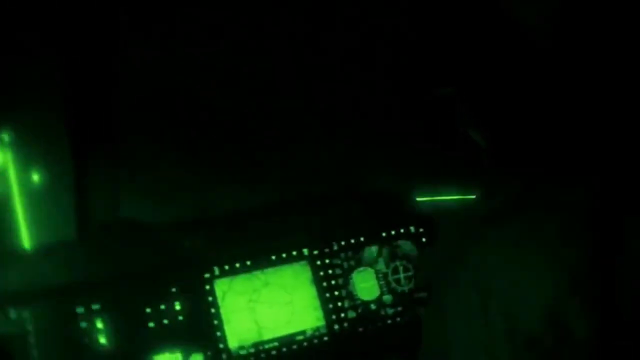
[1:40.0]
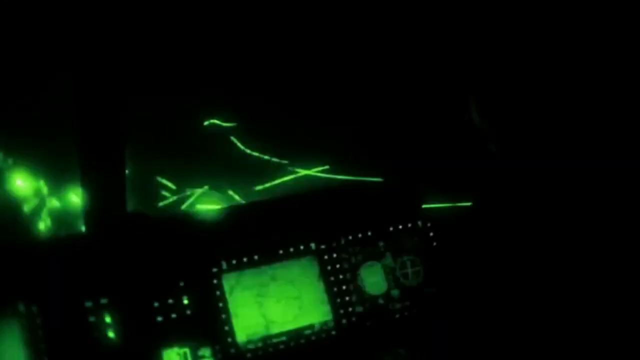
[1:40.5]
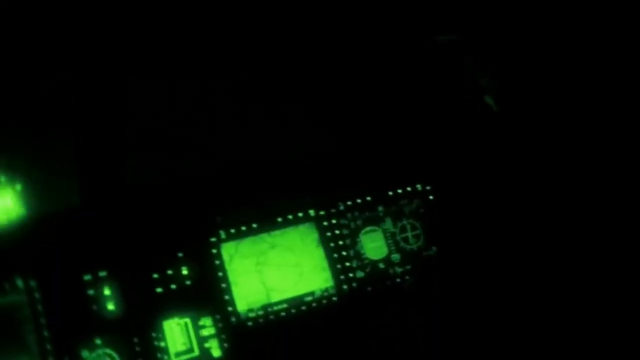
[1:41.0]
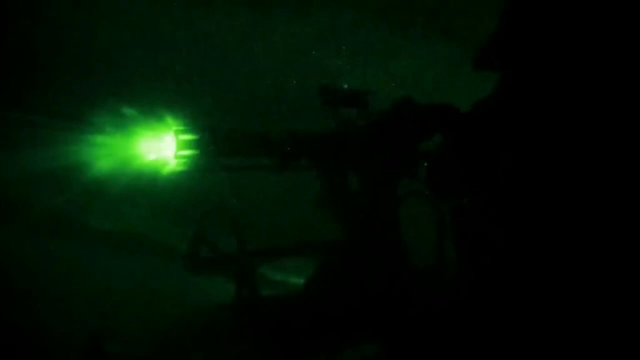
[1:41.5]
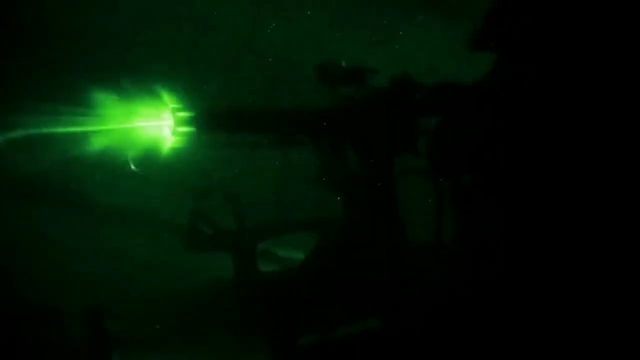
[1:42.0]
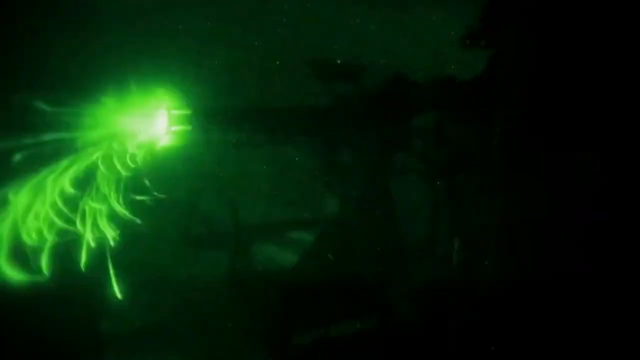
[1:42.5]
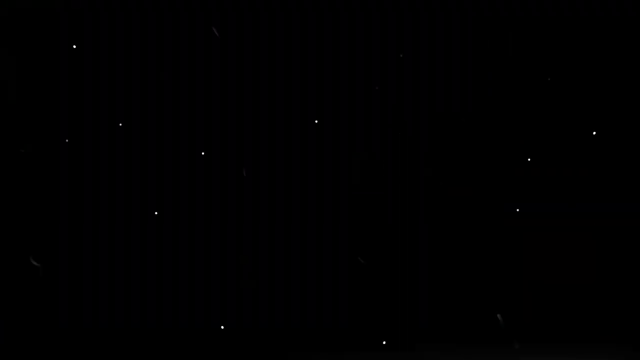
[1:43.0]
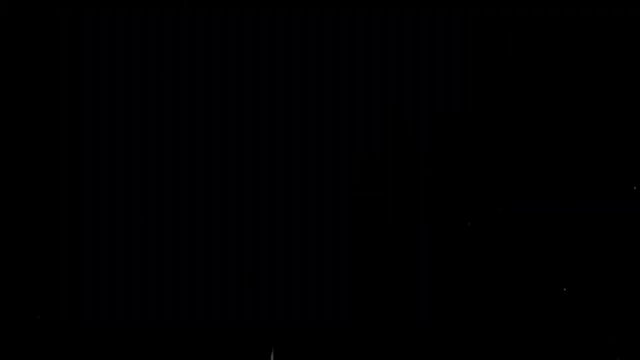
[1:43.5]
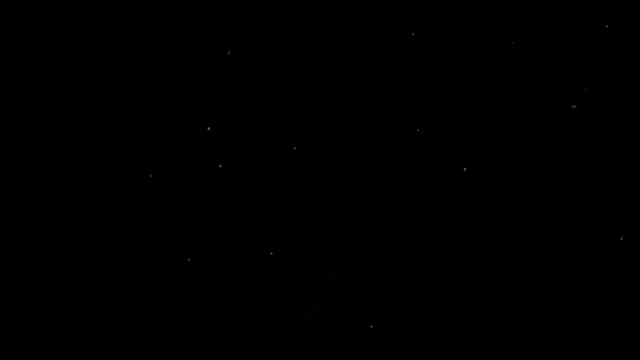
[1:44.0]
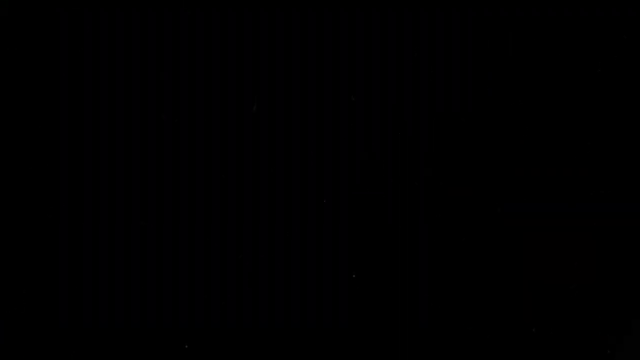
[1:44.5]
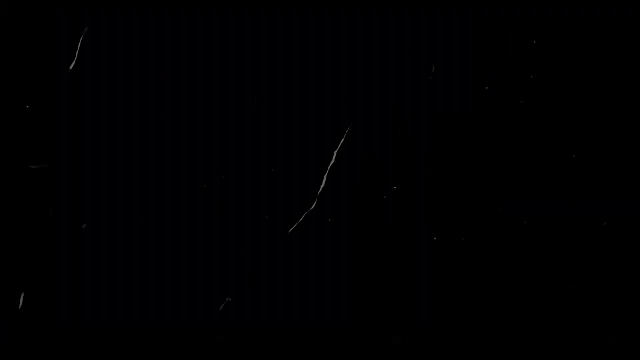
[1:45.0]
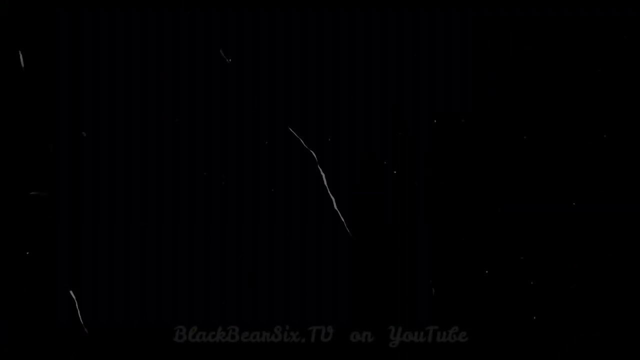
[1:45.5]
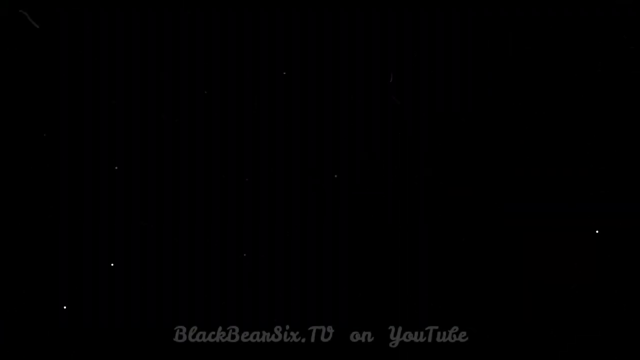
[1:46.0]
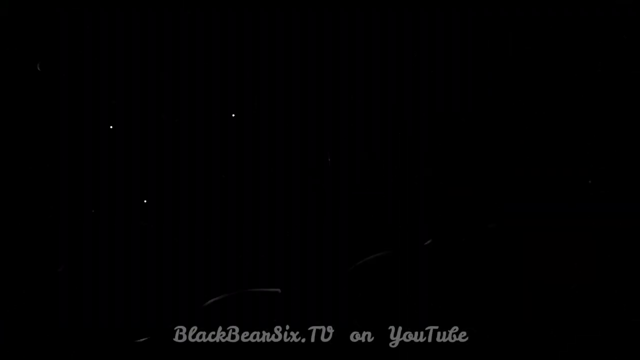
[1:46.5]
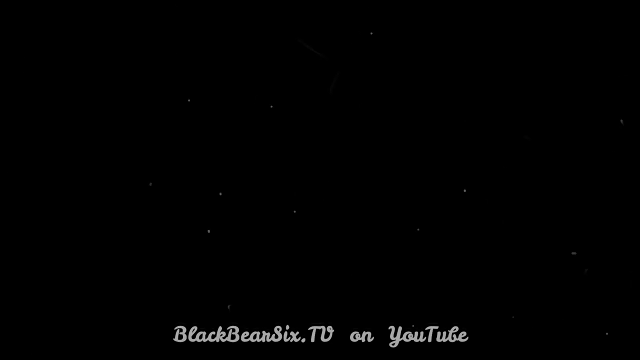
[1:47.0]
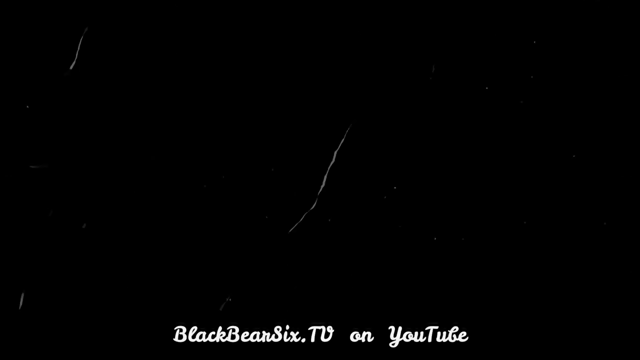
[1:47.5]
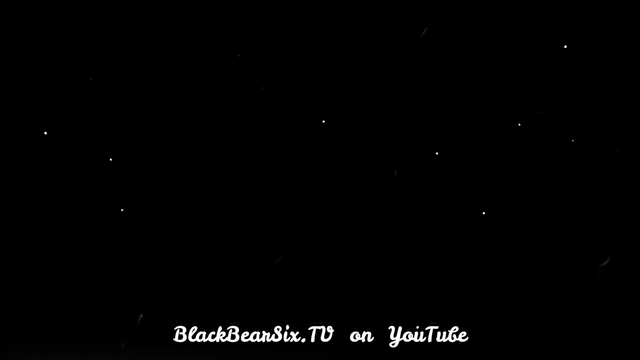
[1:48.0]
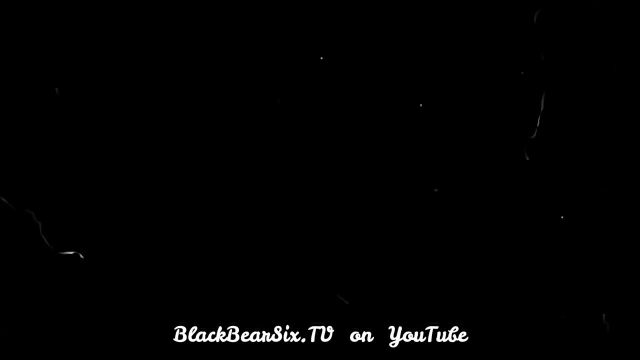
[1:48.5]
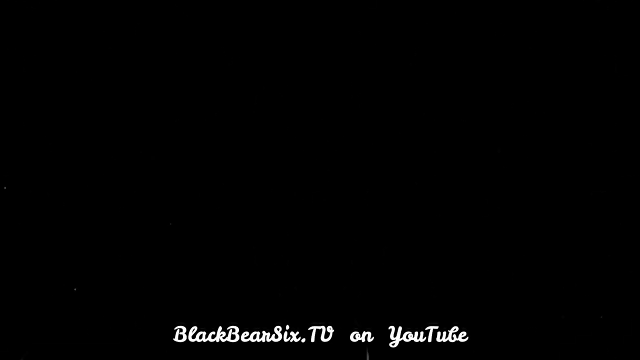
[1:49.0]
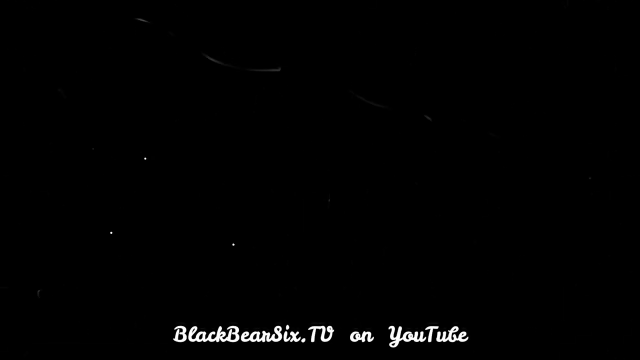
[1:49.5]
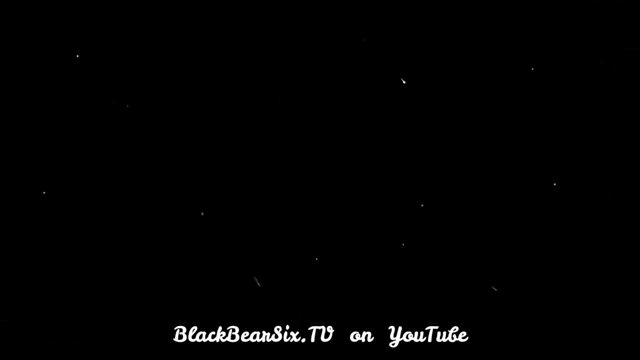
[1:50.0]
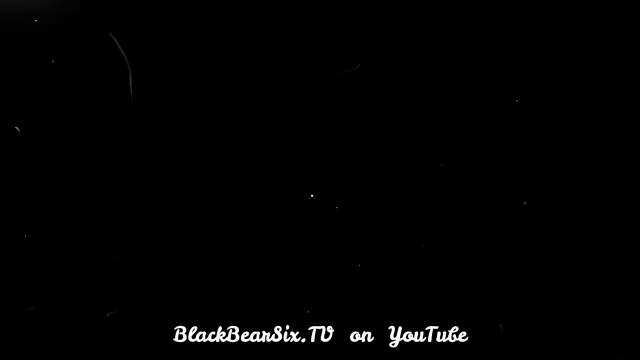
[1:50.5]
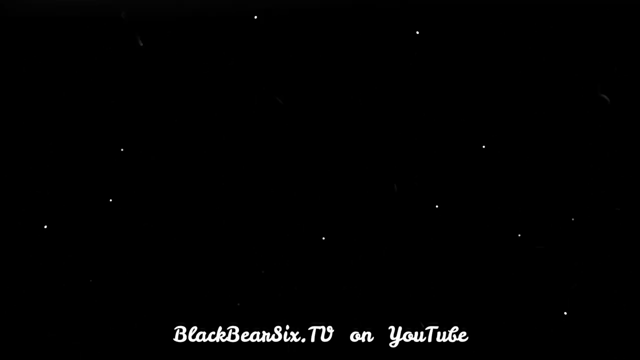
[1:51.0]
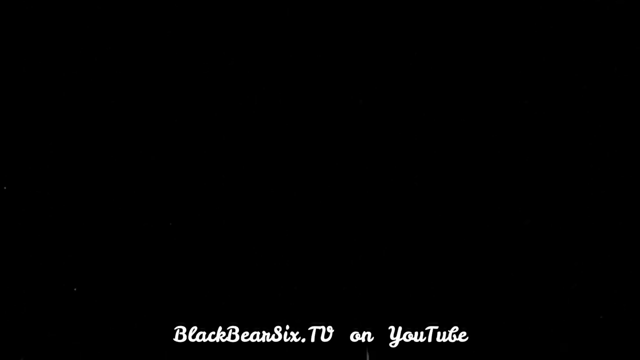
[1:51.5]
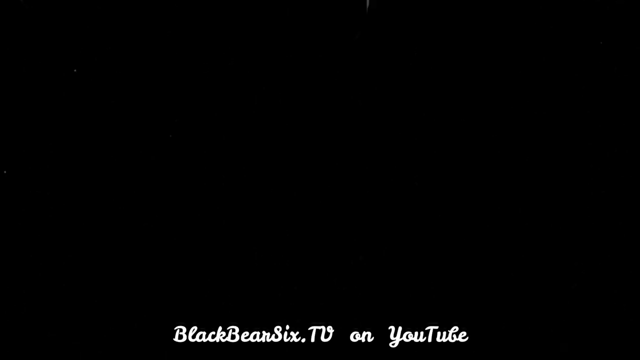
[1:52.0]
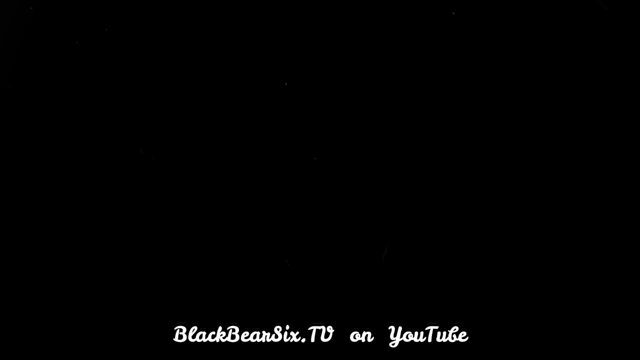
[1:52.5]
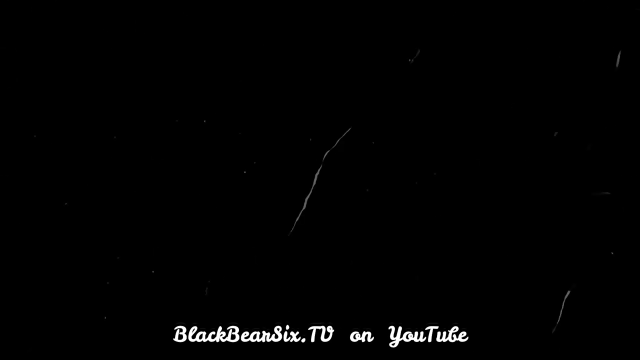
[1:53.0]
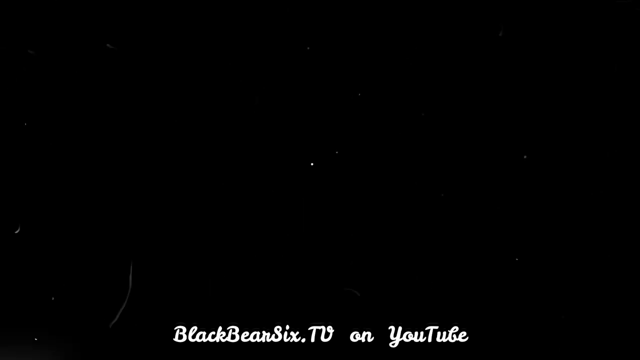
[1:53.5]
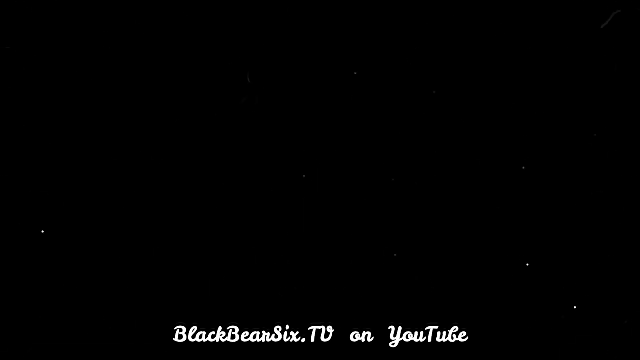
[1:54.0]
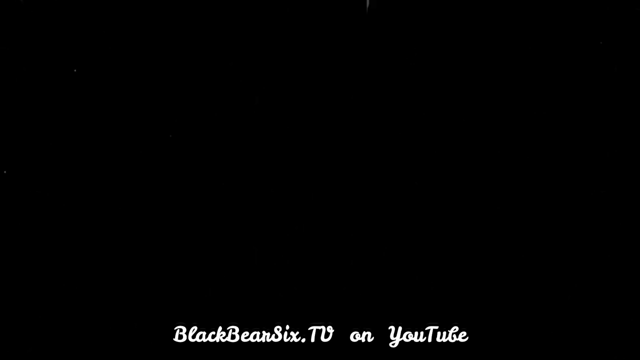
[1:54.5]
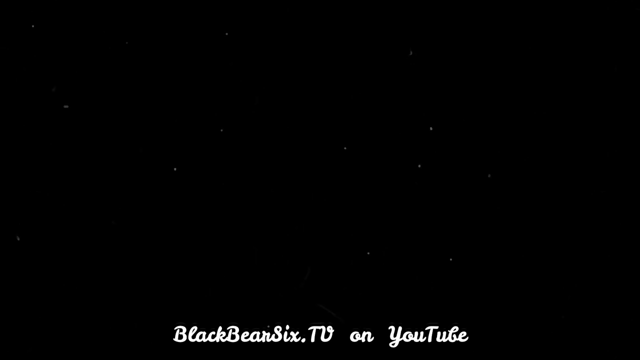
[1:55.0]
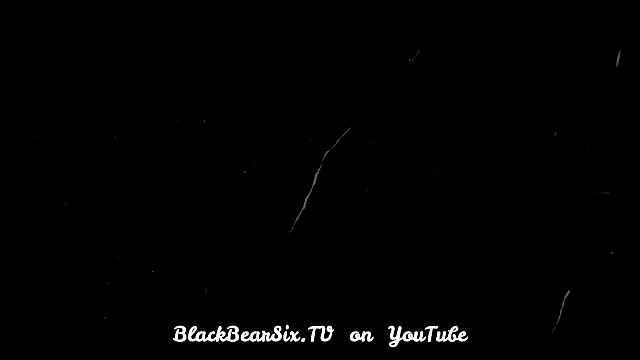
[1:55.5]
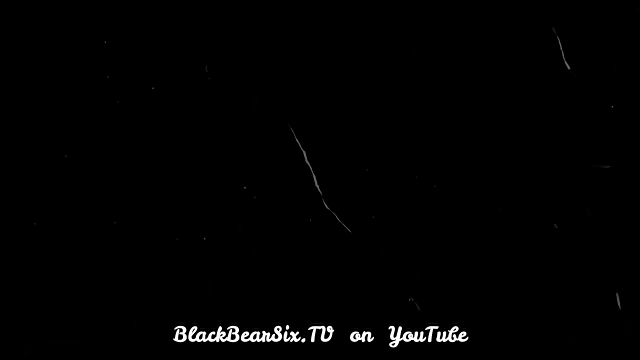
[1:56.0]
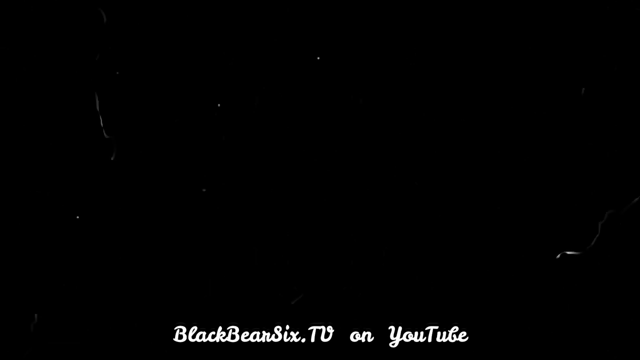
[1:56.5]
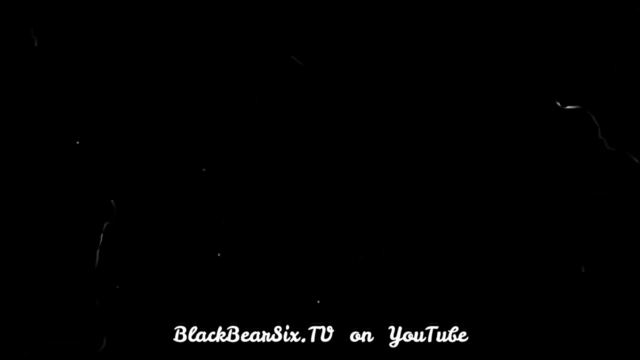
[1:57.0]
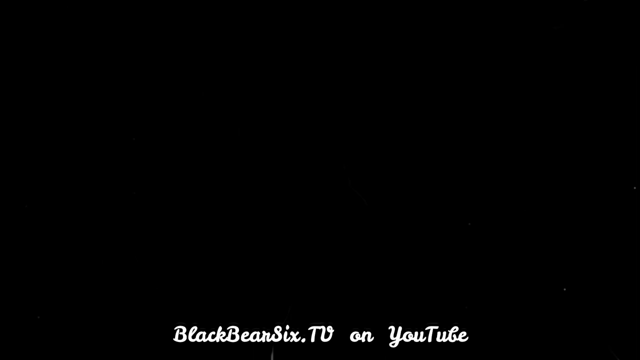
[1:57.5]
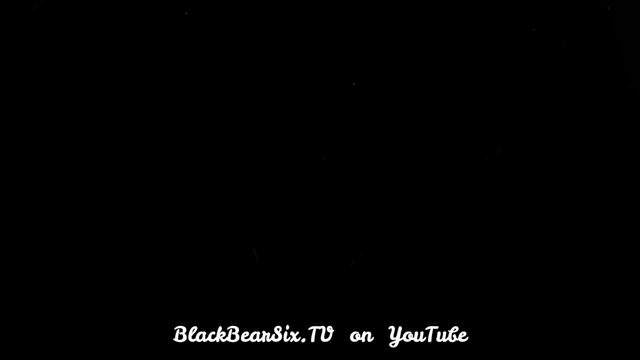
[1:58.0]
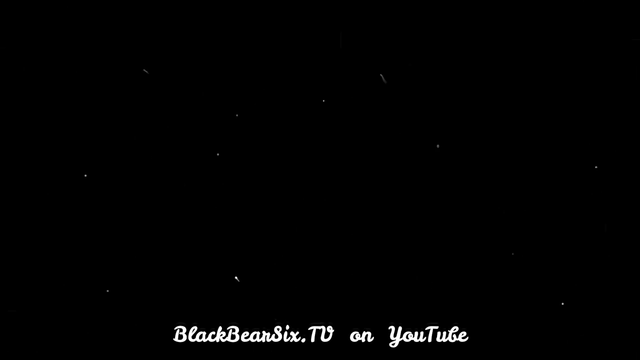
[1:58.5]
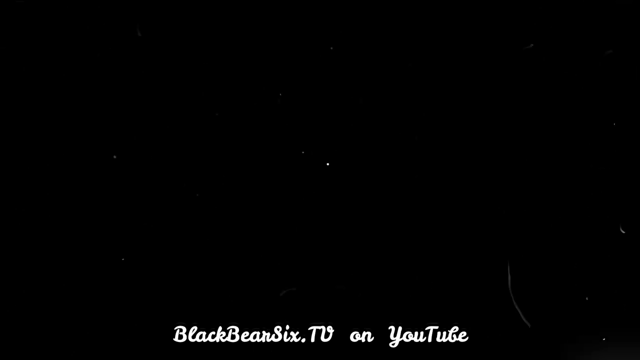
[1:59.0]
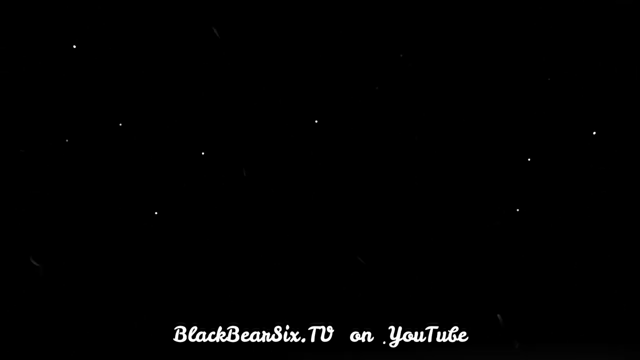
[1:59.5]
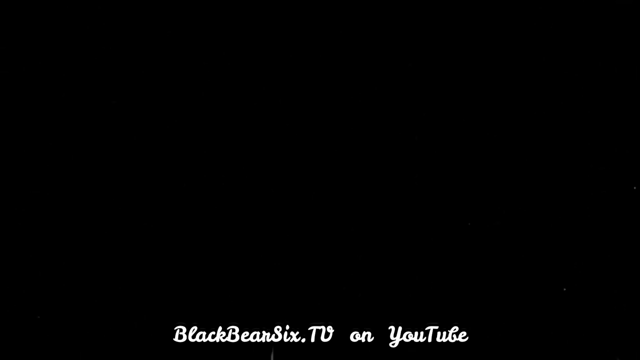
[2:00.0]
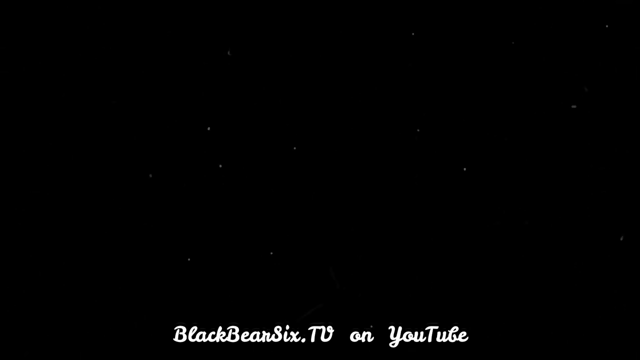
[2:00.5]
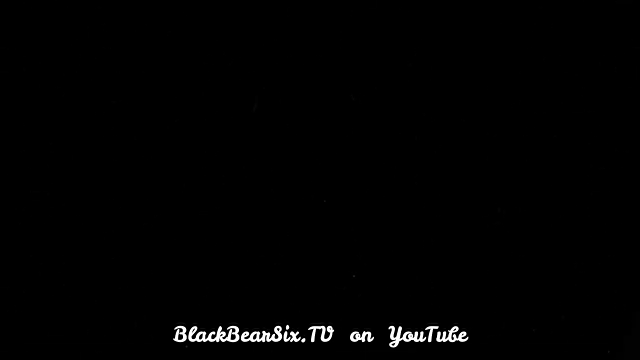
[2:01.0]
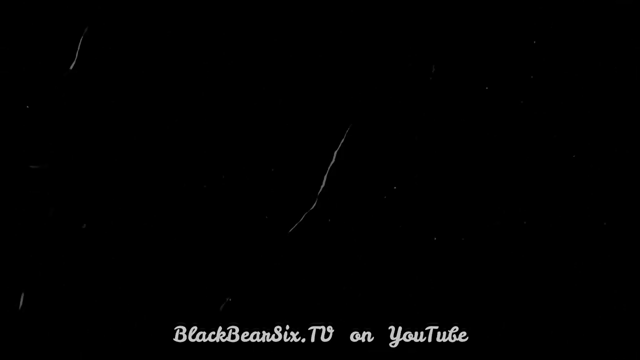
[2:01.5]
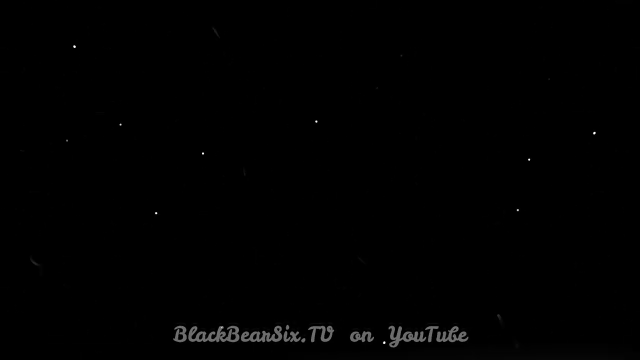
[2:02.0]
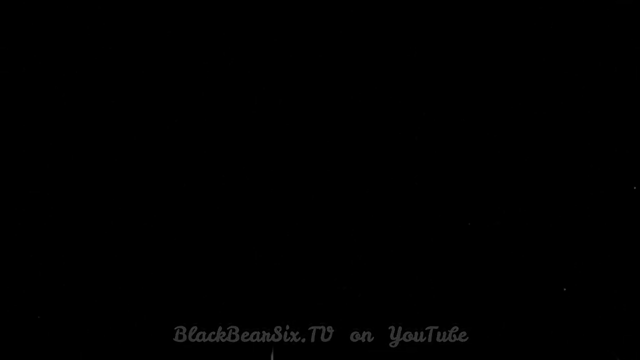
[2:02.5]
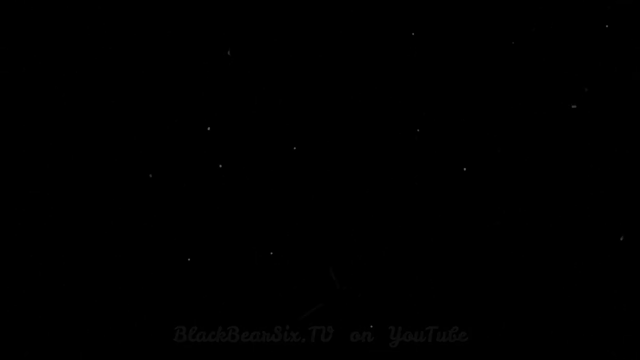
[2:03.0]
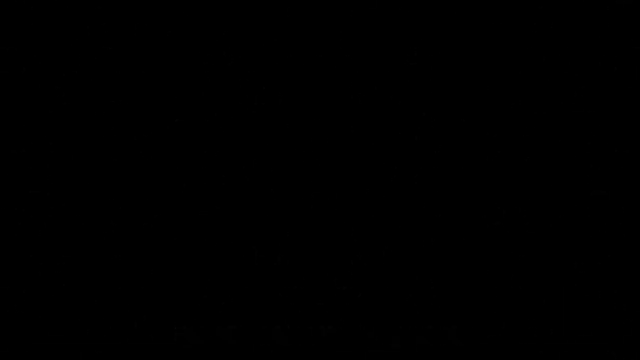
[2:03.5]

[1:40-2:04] The view is from inside the cockpit of the Huey attack chopper. A dozen rounds of missiles are fired in the middle of the night, with night vision used to see the targets. The video ends on a black screen with a static background like an old movie. Links to various YouTube channels appear at the end, possibly military-related or instructional ones.